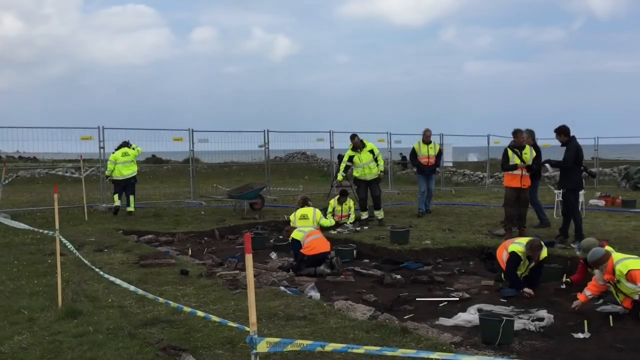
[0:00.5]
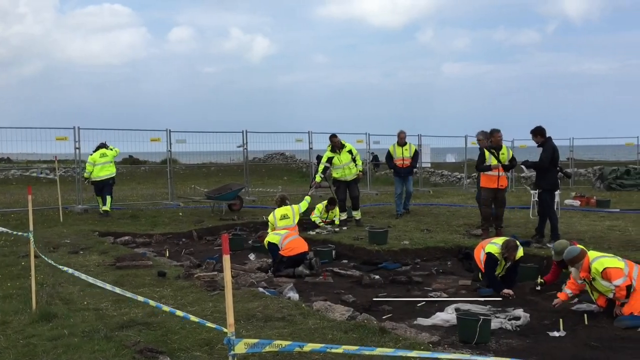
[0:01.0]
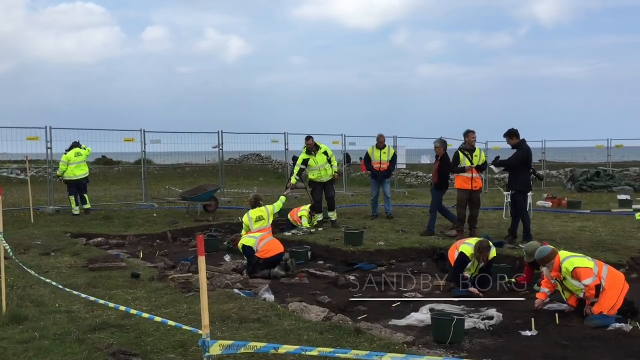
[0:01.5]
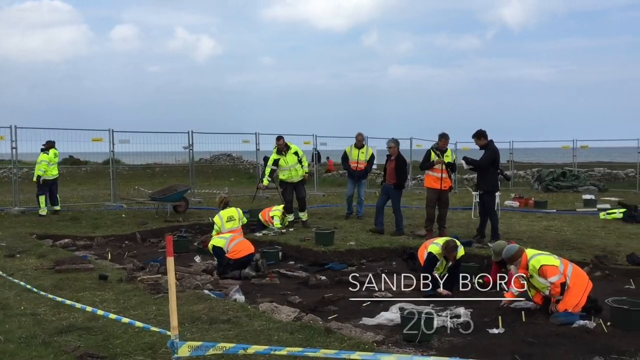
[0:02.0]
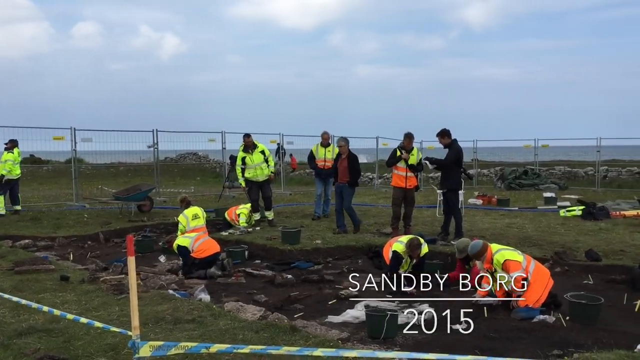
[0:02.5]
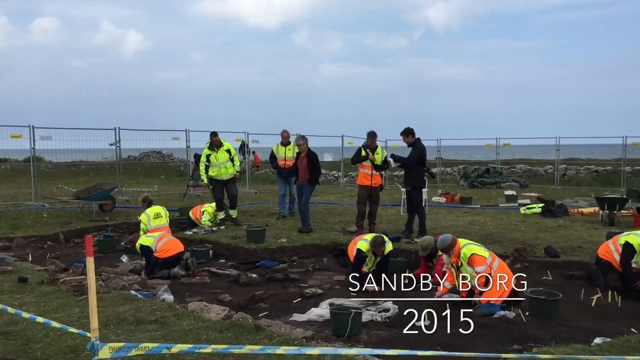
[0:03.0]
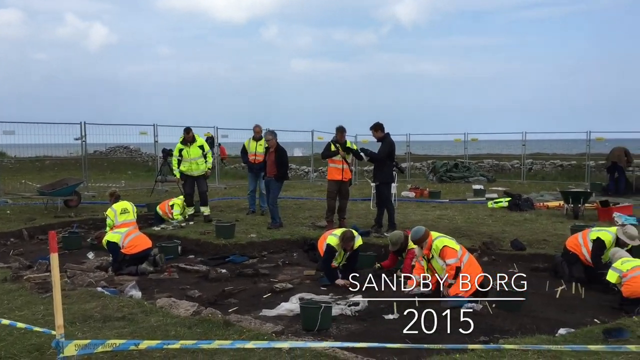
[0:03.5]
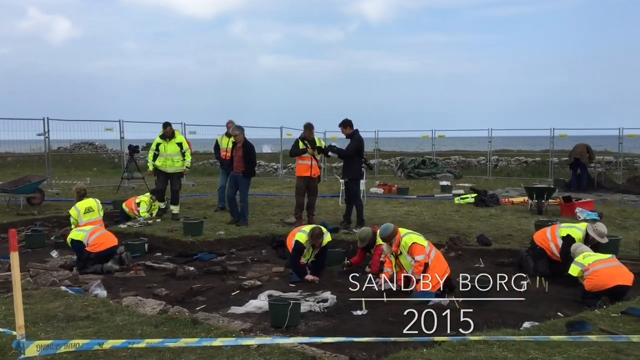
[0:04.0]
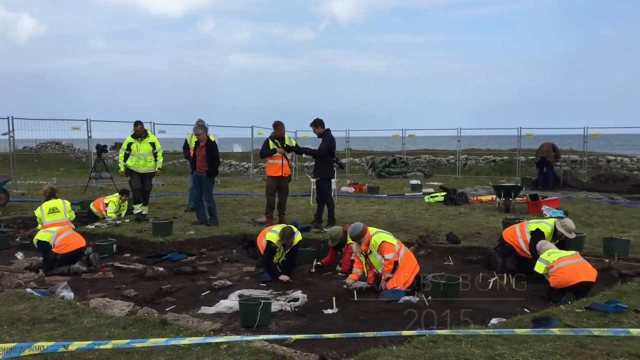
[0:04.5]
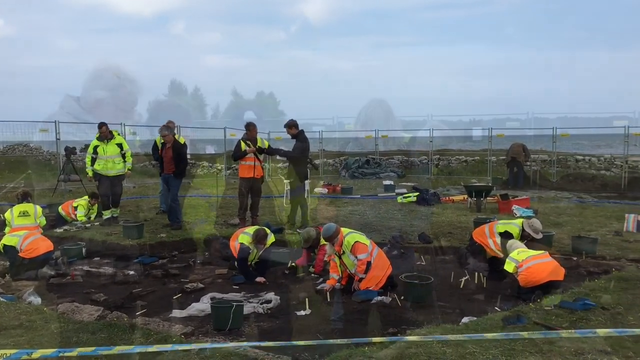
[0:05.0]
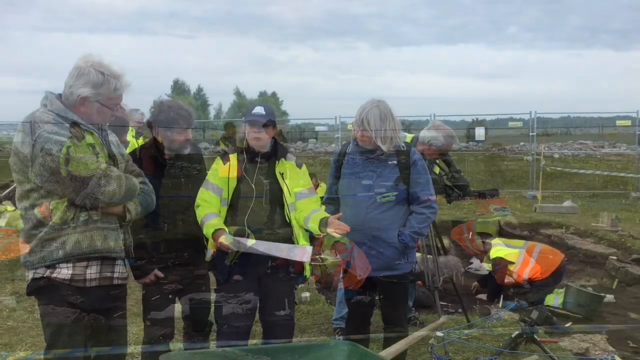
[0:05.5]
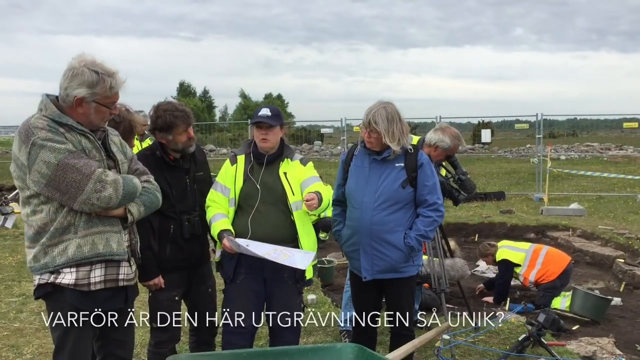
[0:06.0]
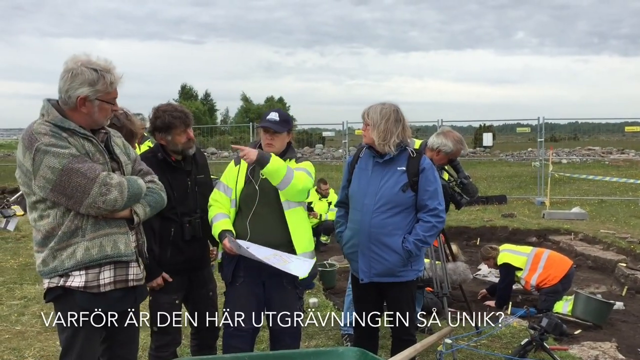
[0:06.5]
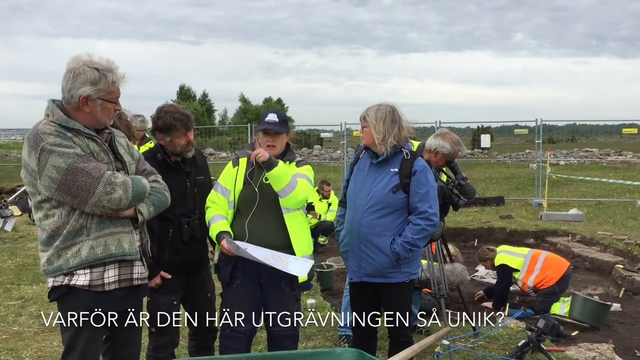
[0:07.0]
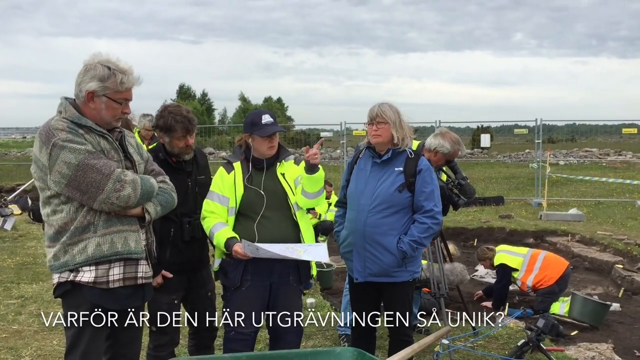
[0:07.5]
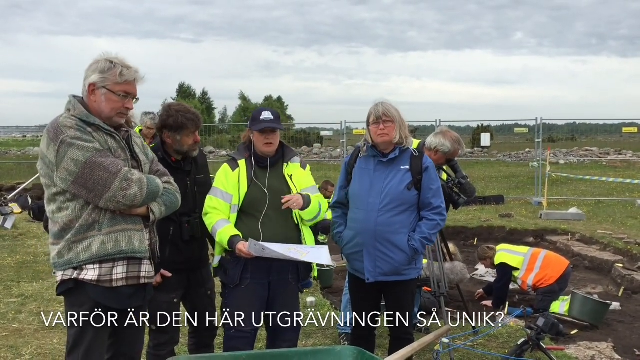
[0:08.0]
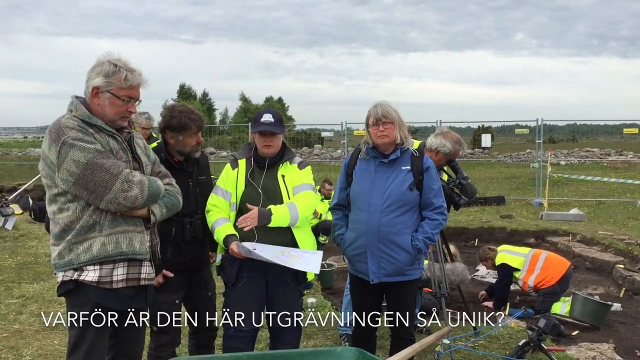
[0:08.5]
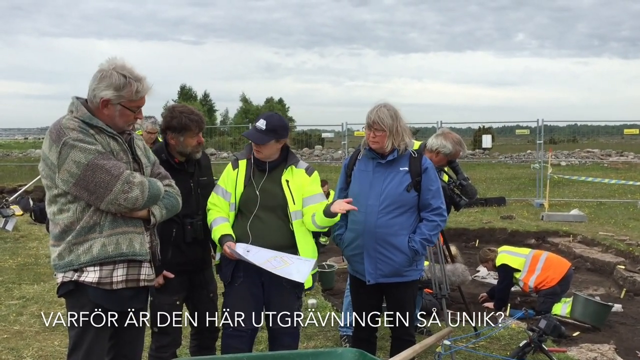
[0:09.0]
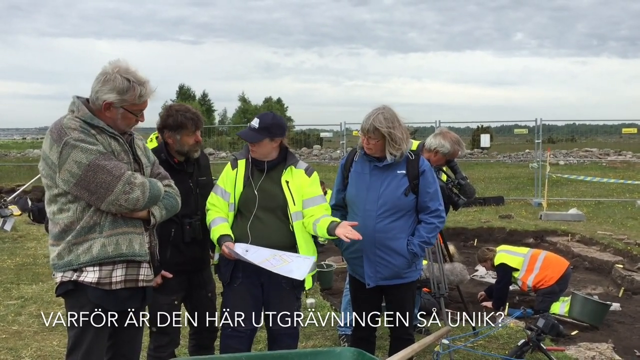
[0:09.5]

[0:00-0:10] Multiple people stand on what looks like an excavation site. There are around 20 people, a mixture of men and women, and they are digging in the ground looking for something. Subtitles in a different language explain where they are and the time of year. The area is taped off and surrounded by fences, apparently to block people from entering the site. Someone is digging something up from the ground with what looks like a trowel. The sky is blue and quite cloudy, and there are trees and rocks surrounding the area. Multiple tools are across the floor.